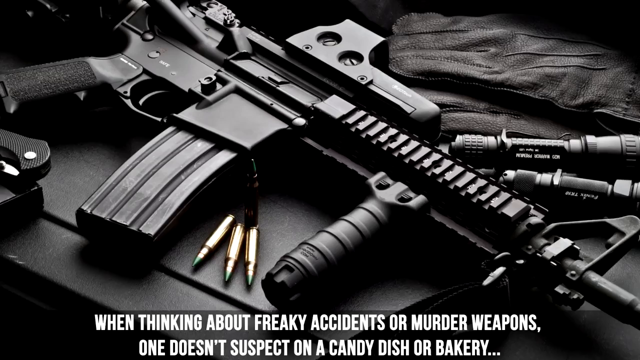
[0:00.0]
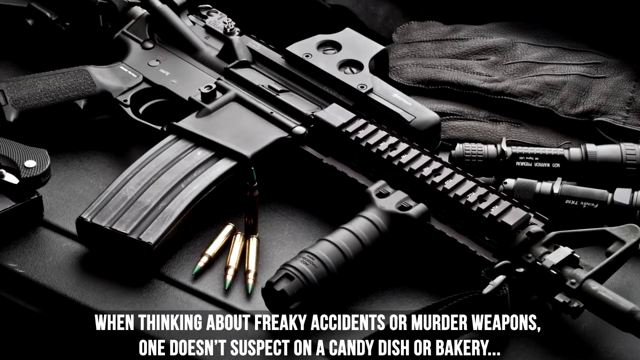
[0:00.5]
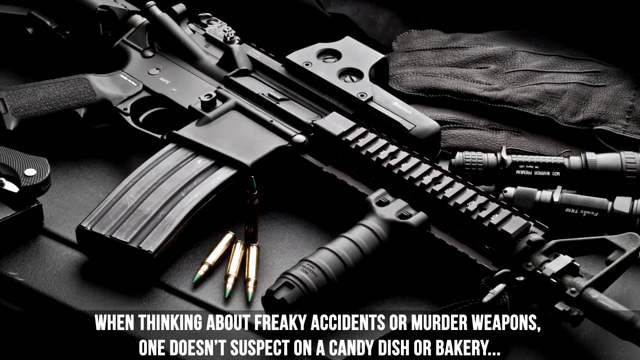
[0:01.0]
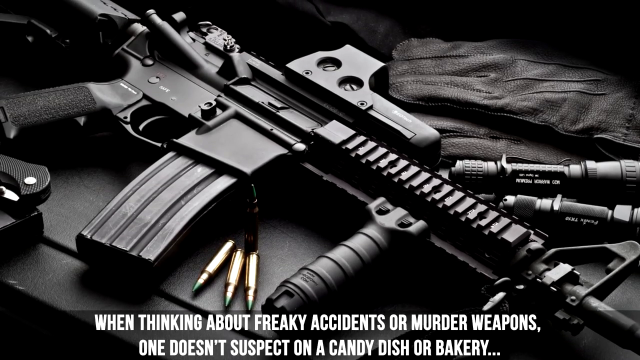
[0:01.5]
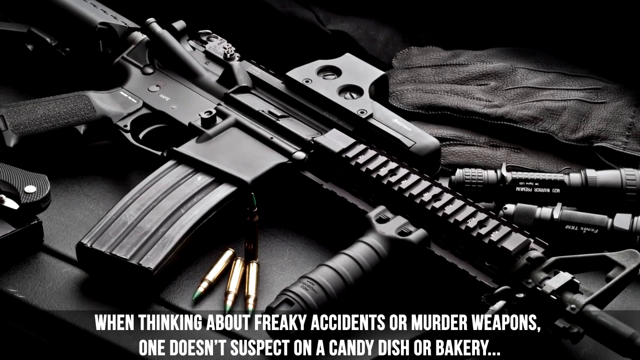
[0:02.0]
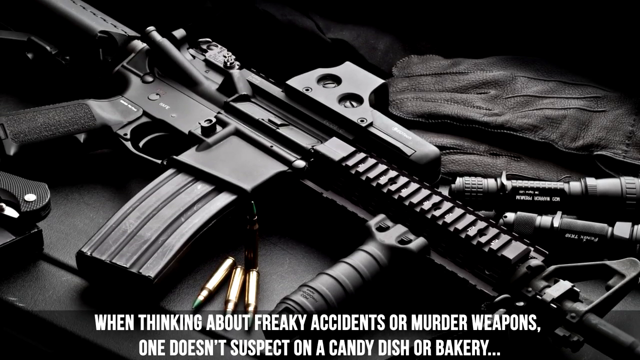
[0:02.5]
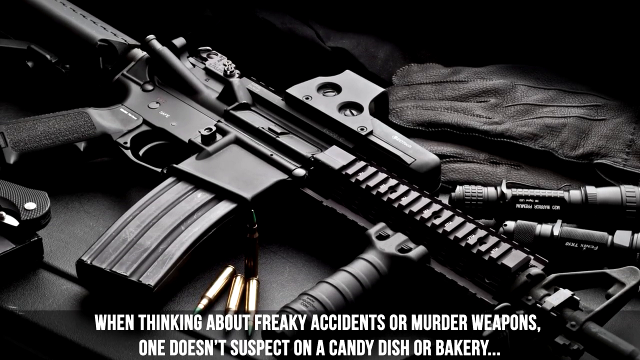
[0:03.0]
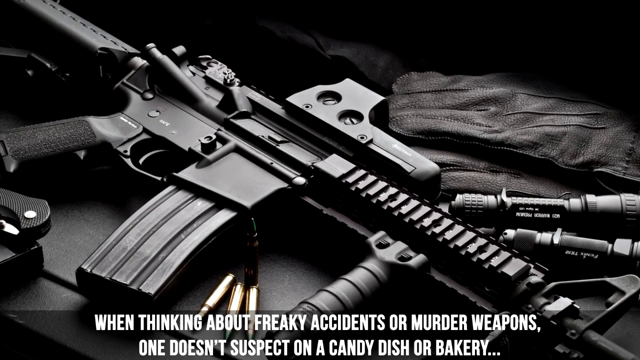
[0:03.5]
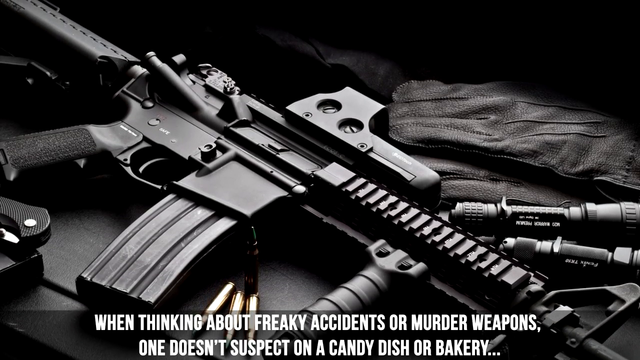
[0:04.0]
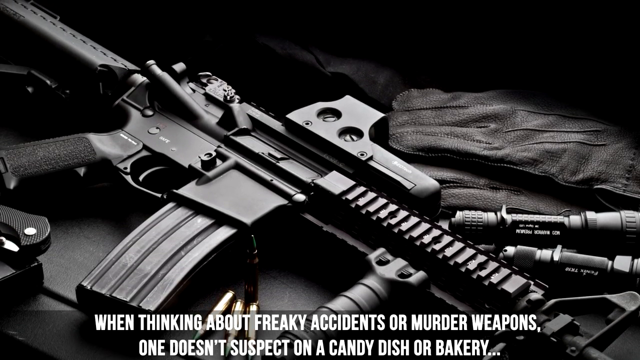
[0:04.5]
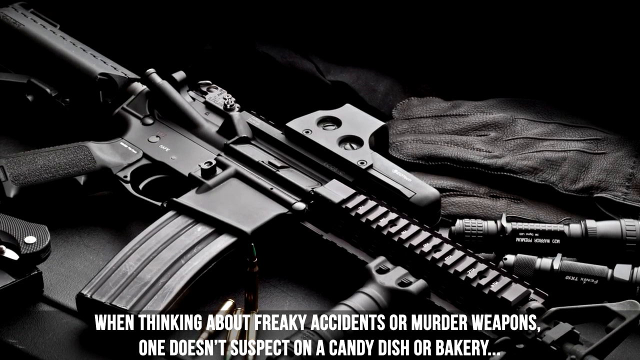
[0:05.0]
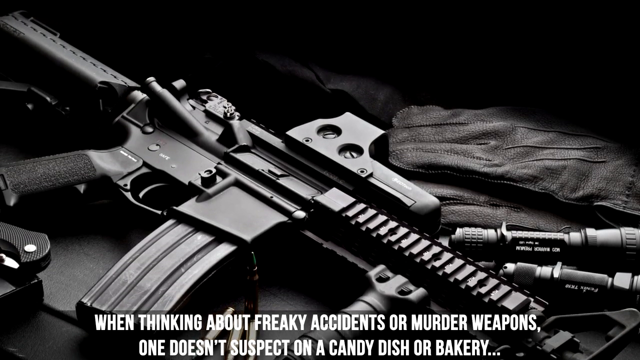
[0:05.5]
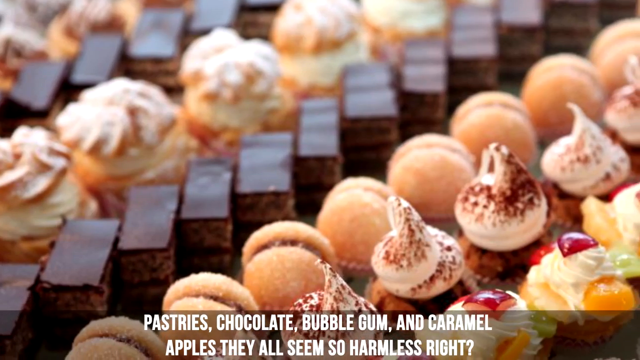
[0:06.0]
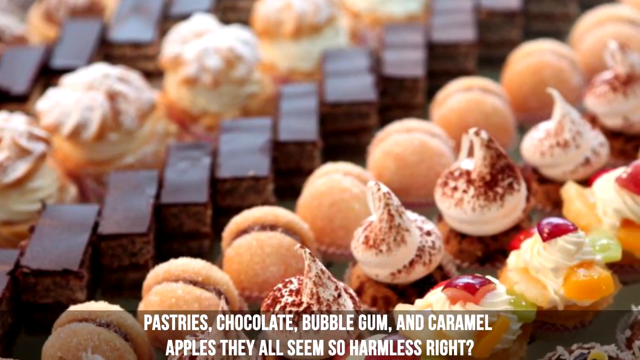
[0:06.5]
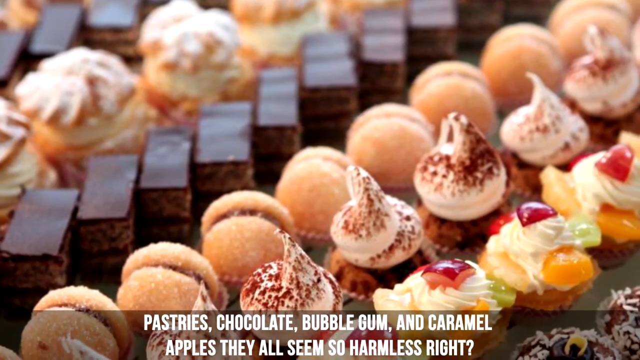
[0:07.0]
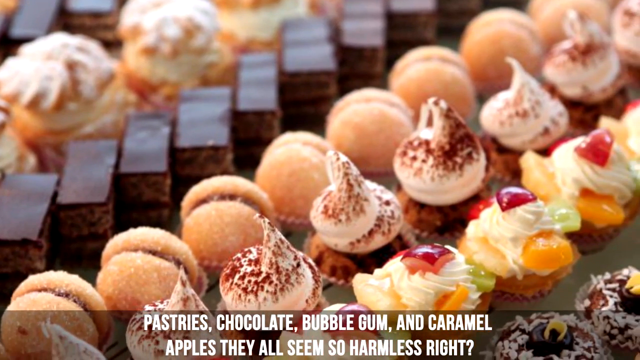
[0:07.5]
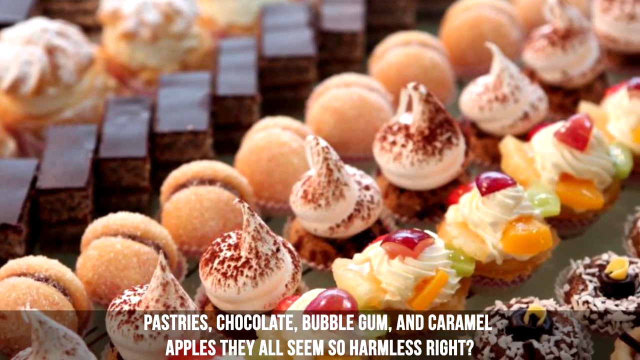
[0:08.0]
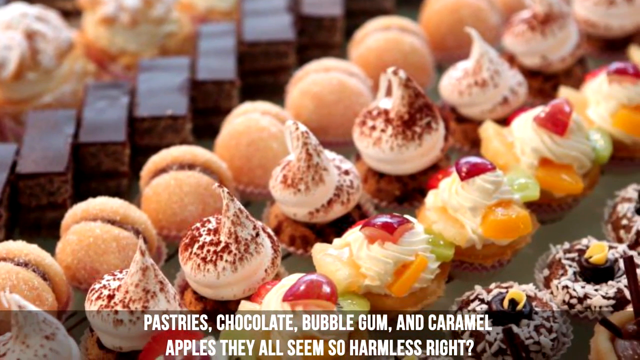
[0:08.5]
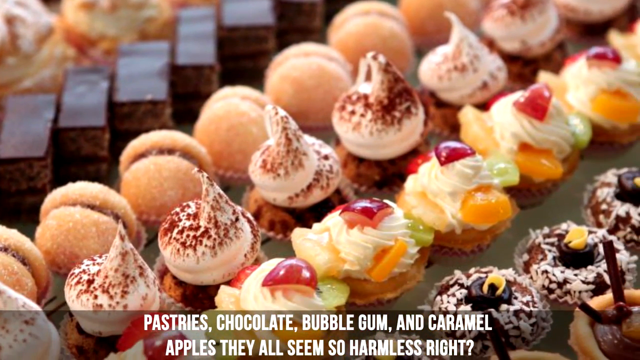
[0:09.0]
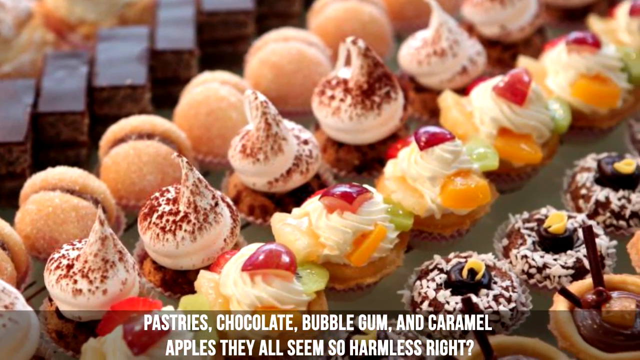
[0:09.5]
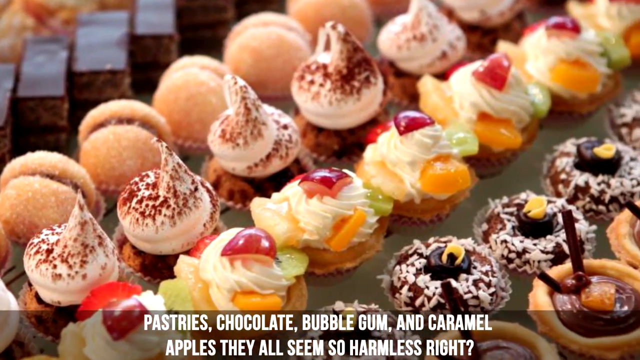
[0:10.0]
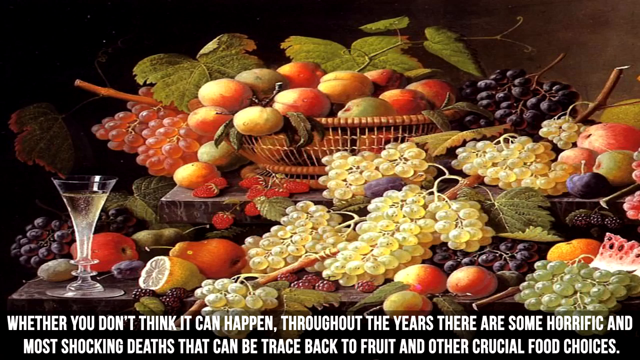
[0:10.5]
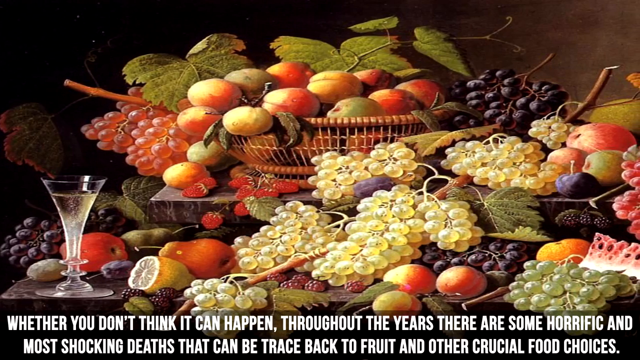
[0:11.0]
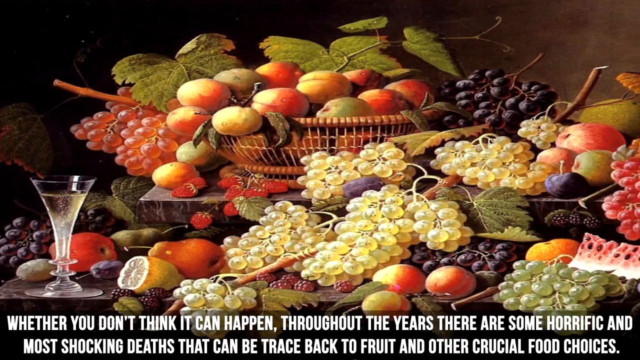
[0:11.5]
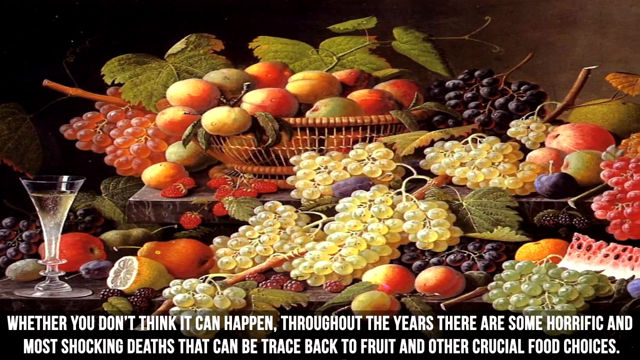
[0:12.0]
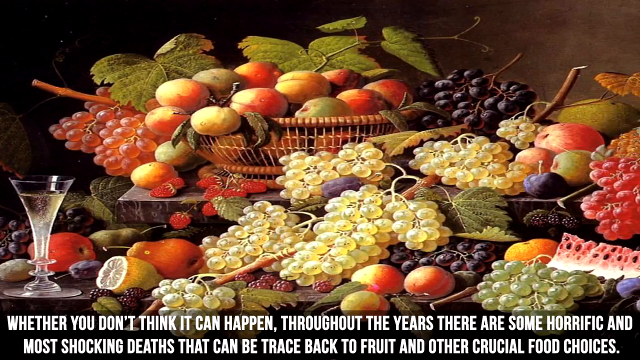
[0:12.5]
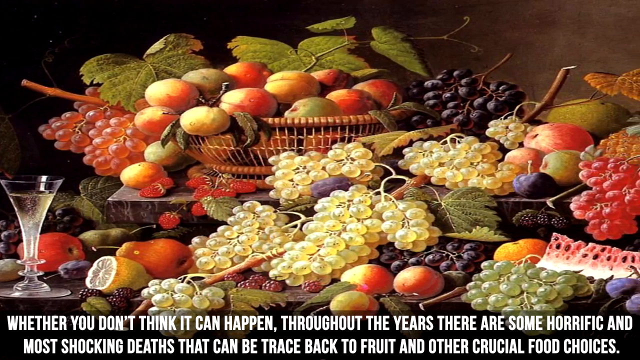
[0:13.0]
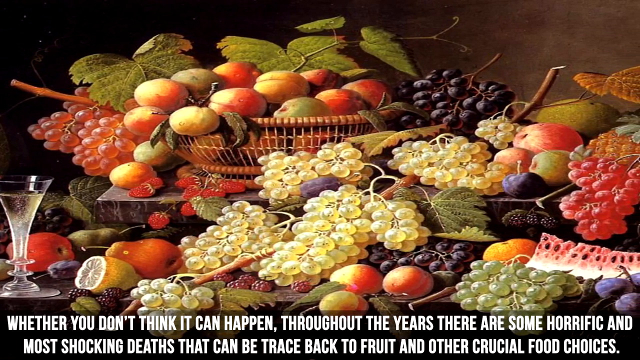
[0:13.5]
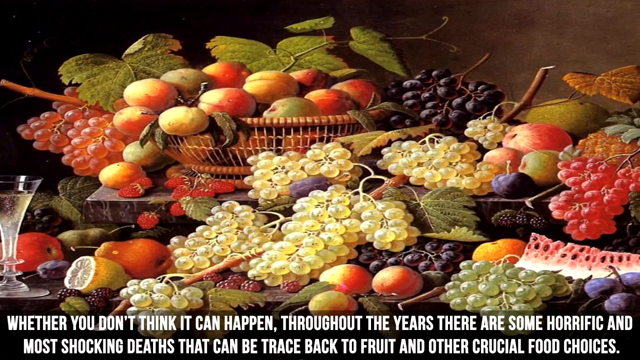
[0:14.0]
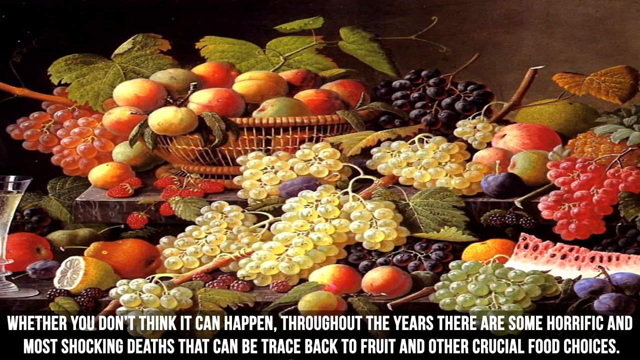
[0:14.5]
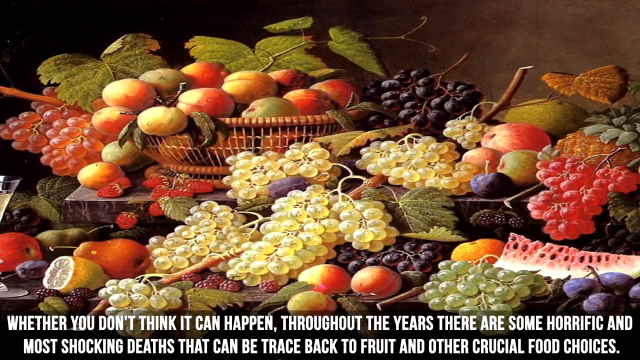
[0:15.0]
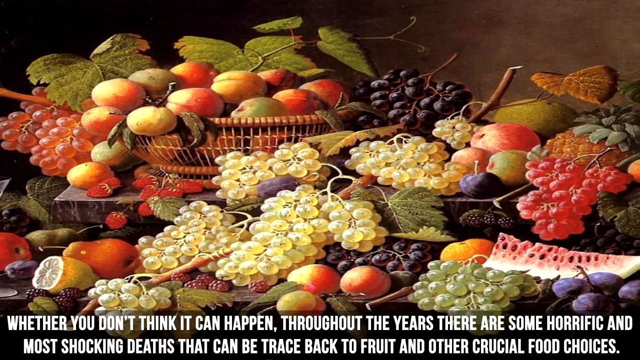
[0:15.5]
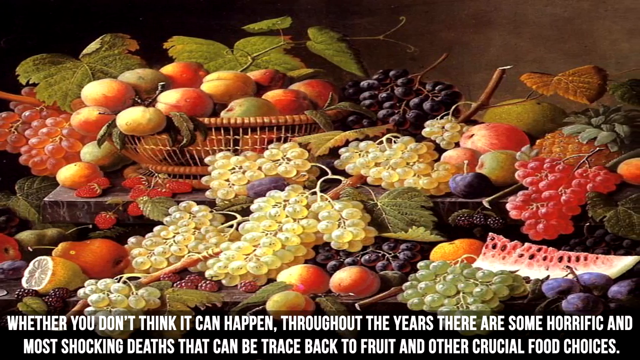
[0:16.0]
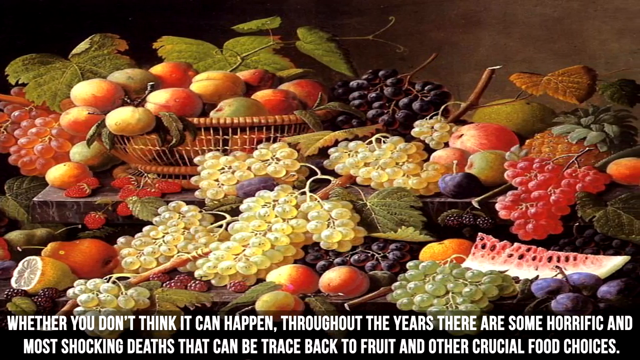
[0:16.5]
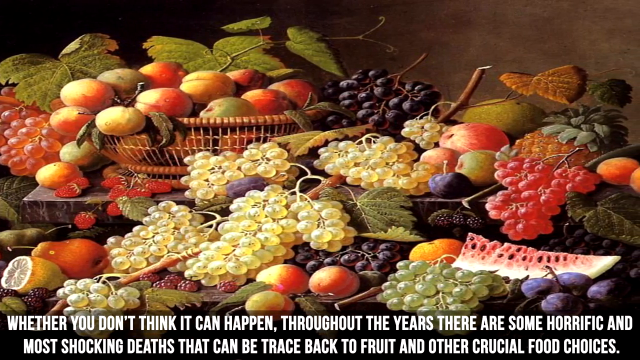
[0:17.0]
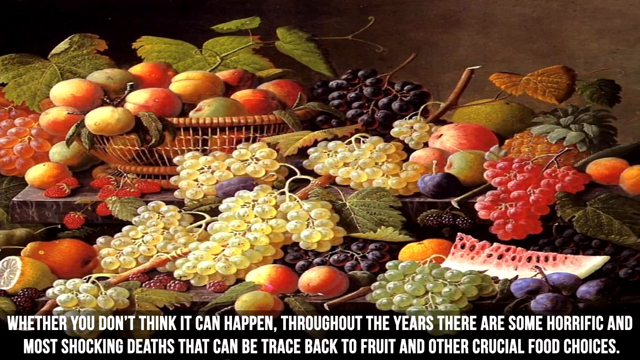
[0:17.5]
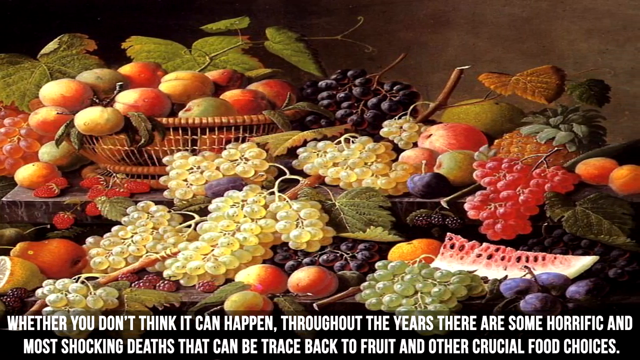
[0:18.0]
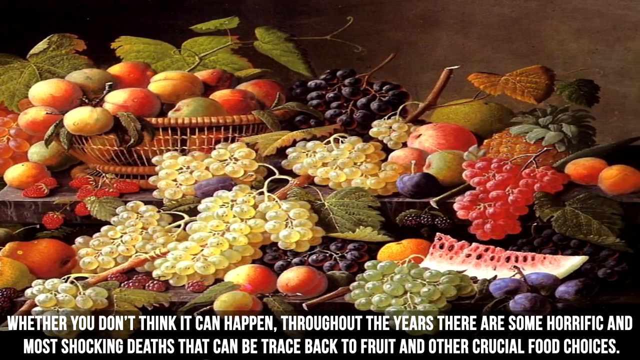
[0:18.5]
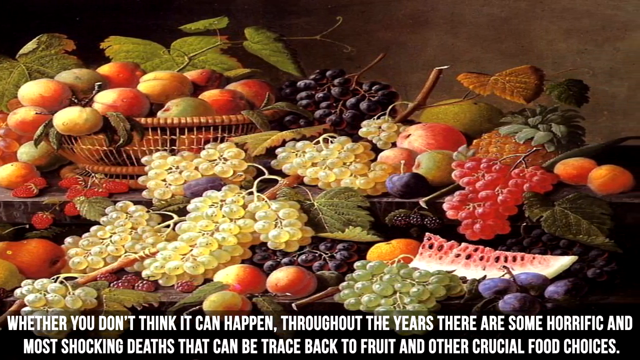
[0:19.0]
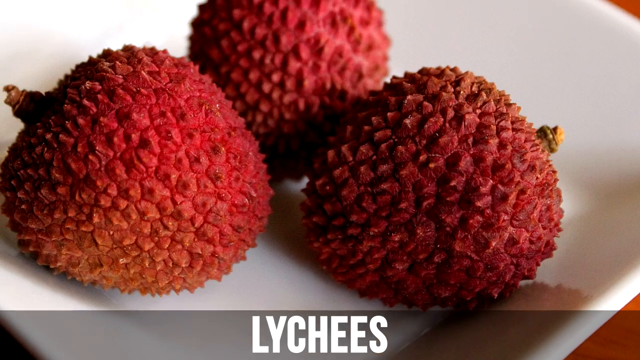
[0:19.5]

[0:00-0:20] The video opens with an image of an automatic weapon, some gloves and scopes, and what looks like a knife in the corner. The caption reads "when thinking about freaky accidents or murder weapons." It goes on to say "pastries, chocolate, bubblegum, and caramel. They all seem so harmless, right?" while an image of baked goods and desserts appears and the camera pans over it. Further text says "throughout the years there are some horrific and most shocking deaths that can be traced back to fruit." The captions appear at the bottom of the screen.